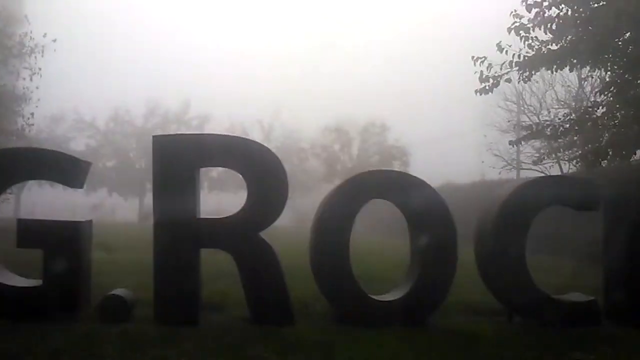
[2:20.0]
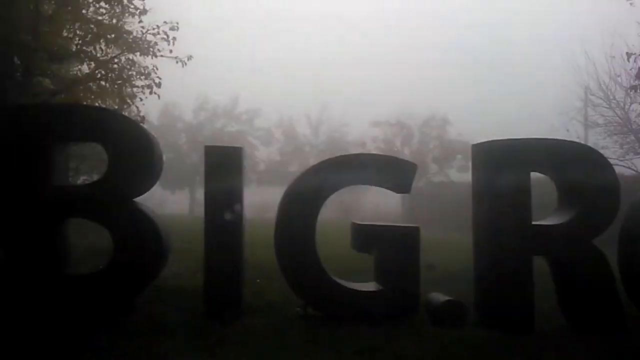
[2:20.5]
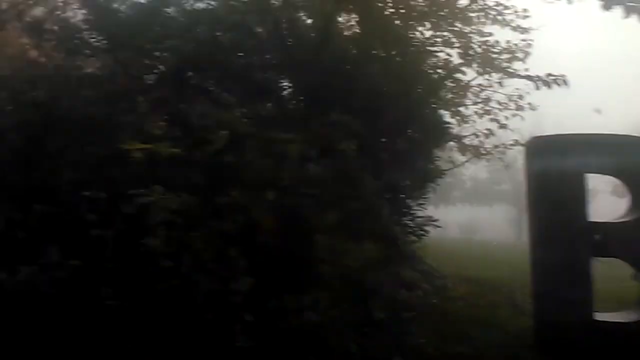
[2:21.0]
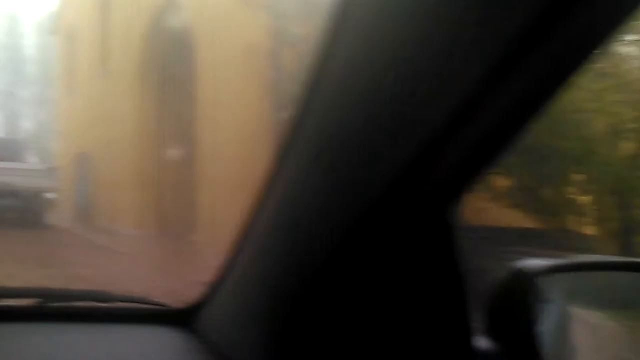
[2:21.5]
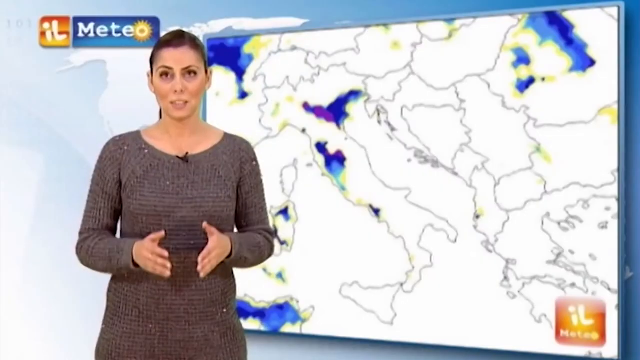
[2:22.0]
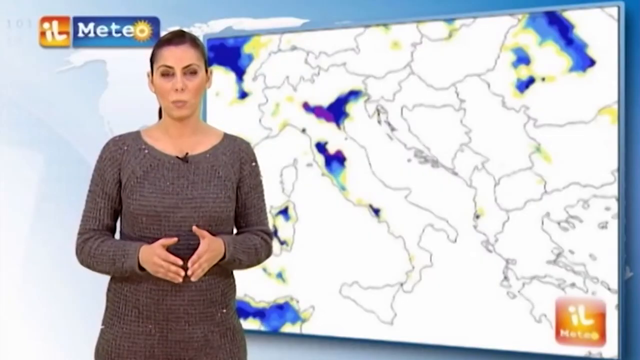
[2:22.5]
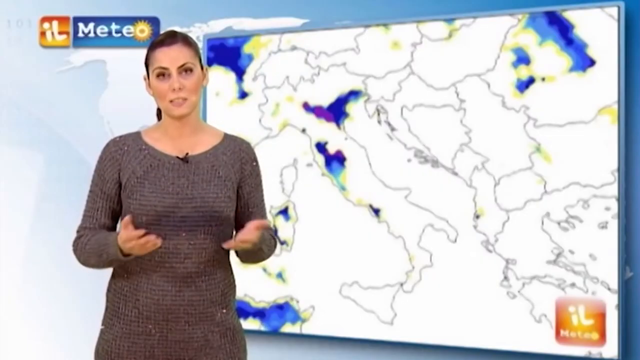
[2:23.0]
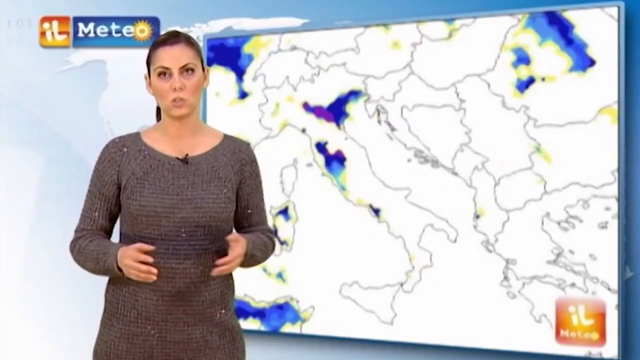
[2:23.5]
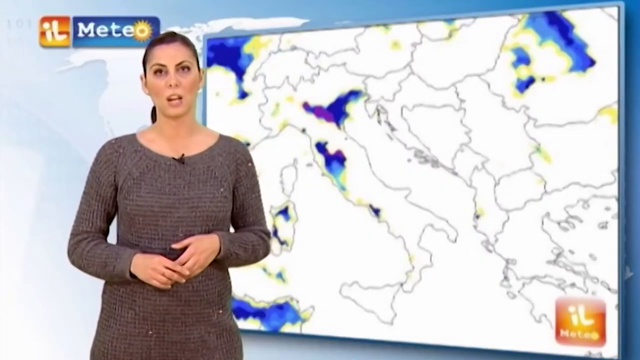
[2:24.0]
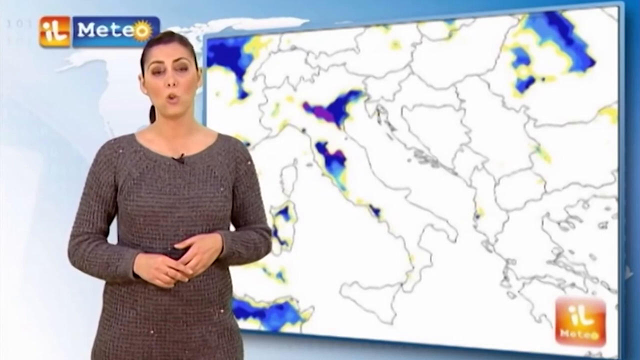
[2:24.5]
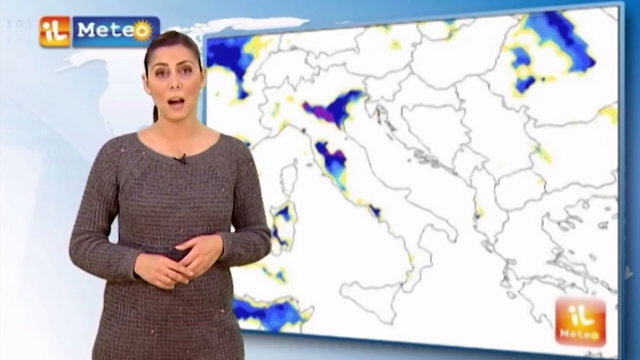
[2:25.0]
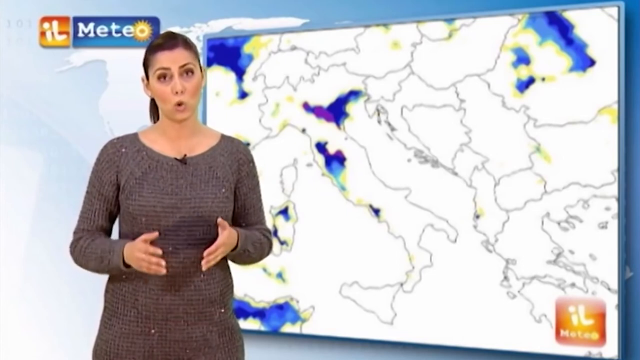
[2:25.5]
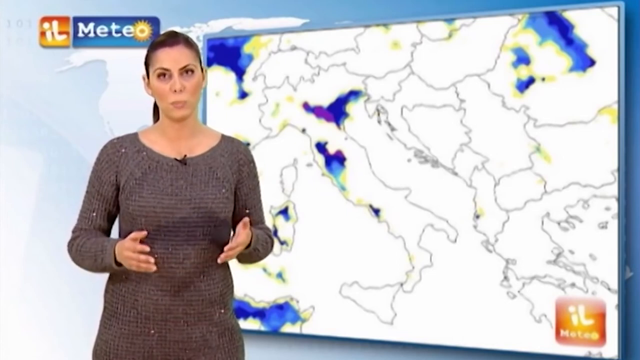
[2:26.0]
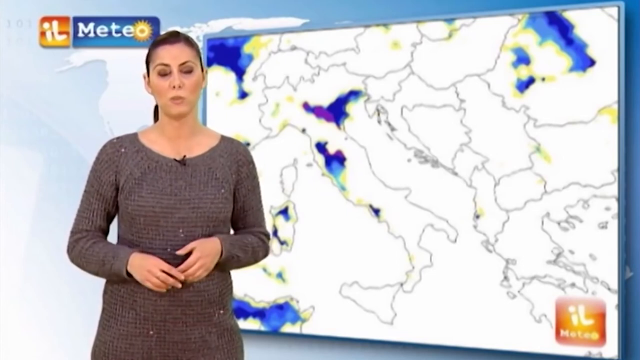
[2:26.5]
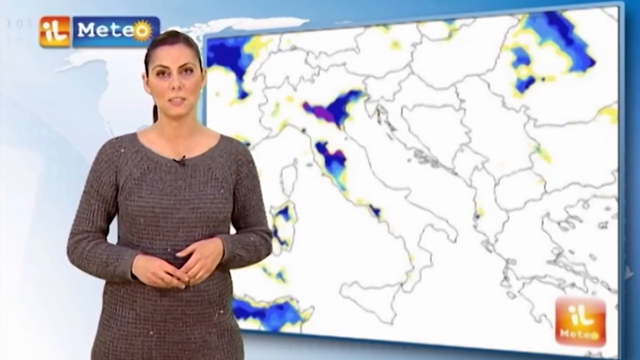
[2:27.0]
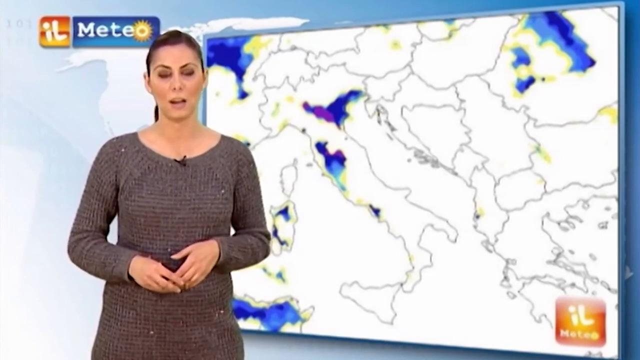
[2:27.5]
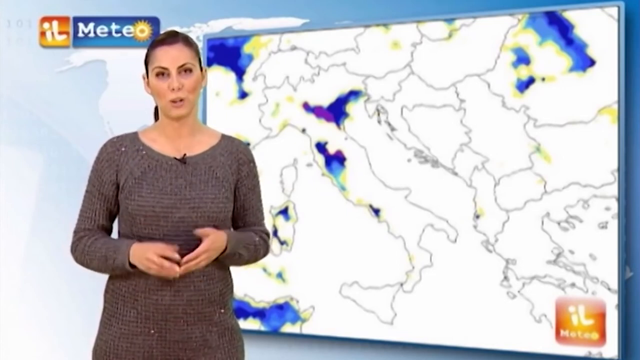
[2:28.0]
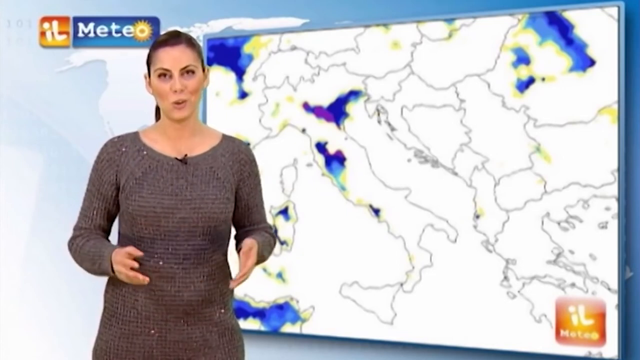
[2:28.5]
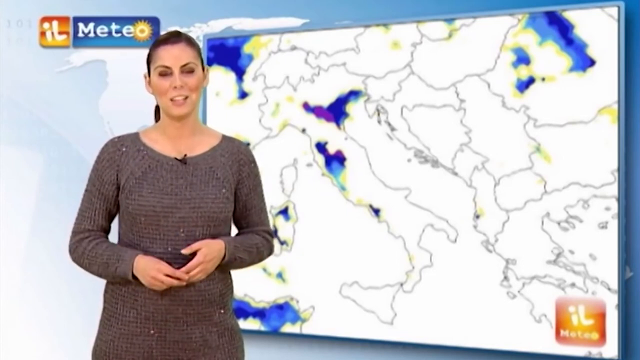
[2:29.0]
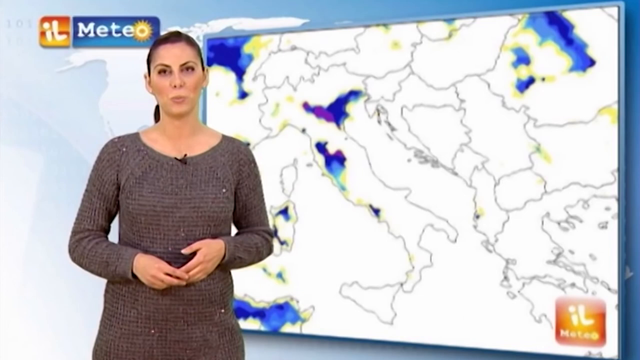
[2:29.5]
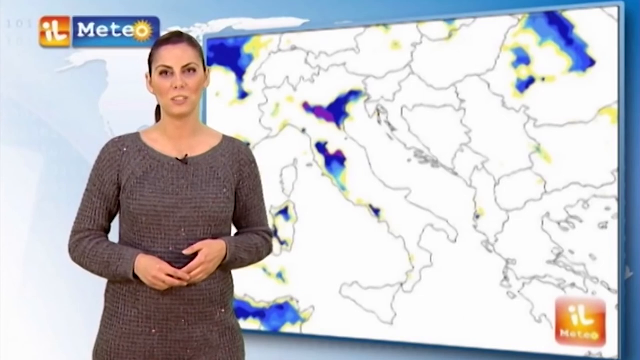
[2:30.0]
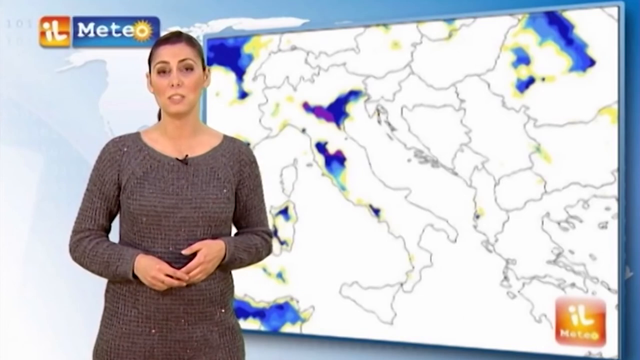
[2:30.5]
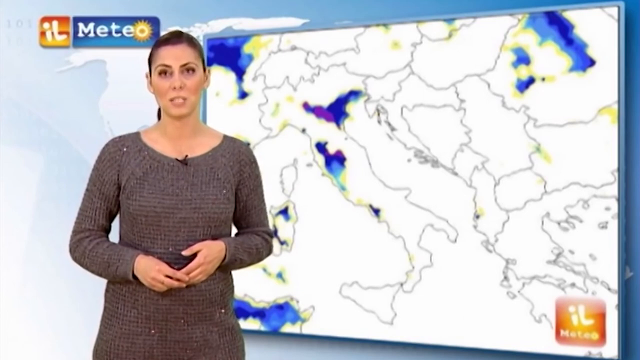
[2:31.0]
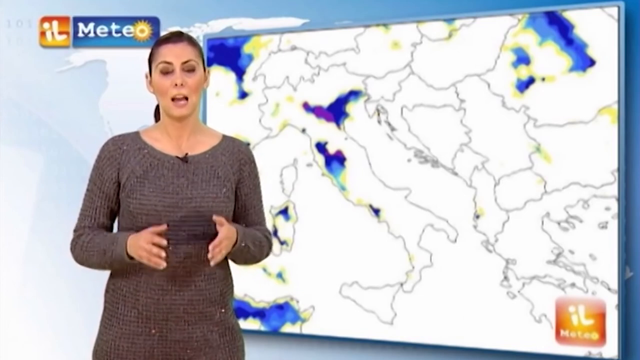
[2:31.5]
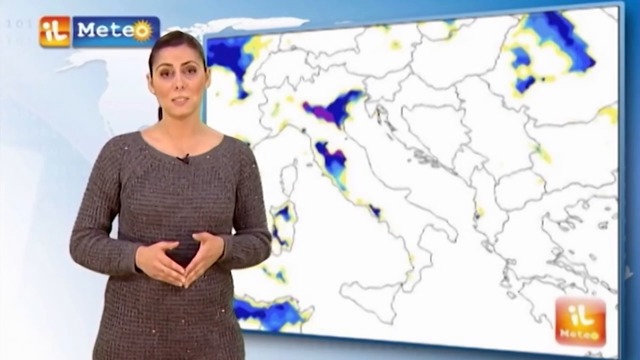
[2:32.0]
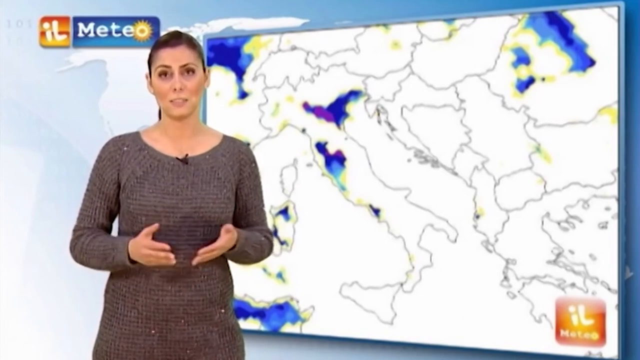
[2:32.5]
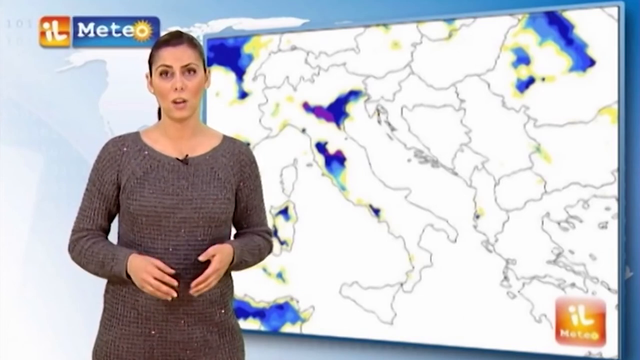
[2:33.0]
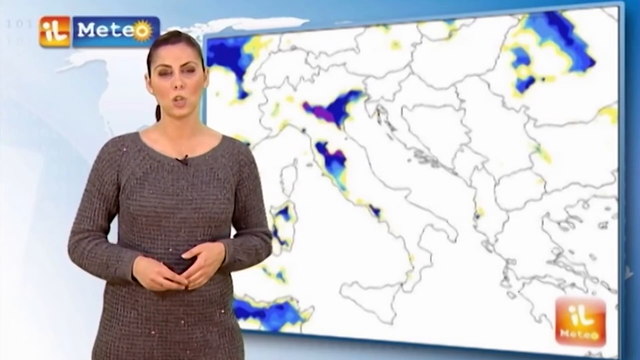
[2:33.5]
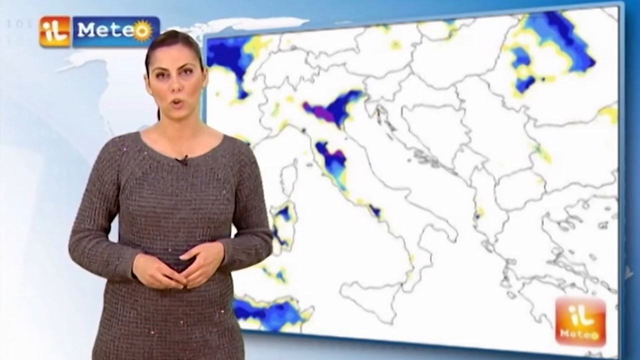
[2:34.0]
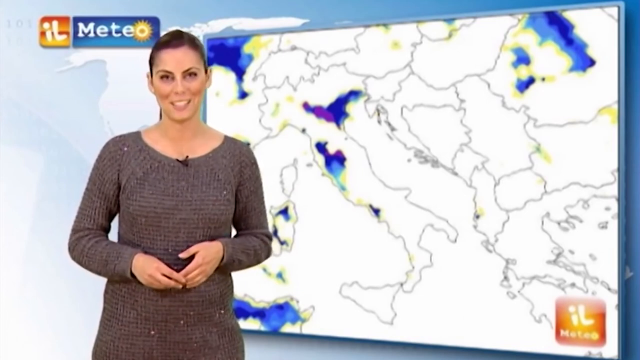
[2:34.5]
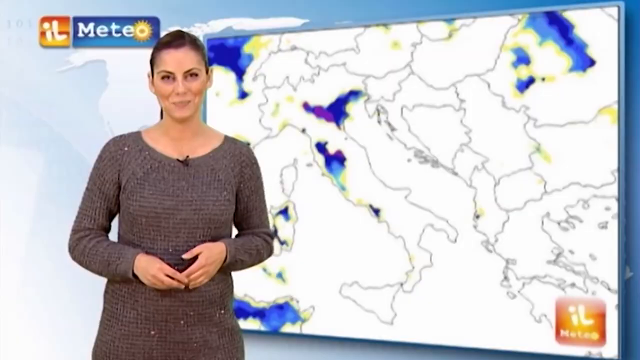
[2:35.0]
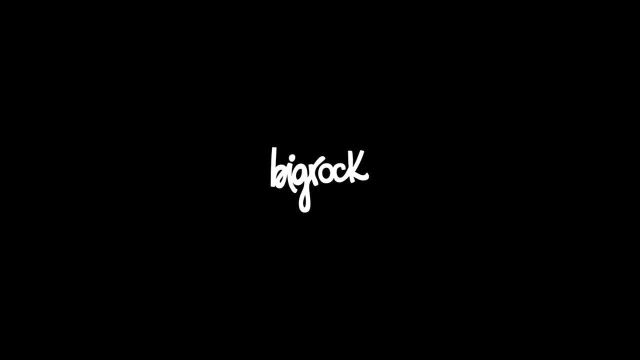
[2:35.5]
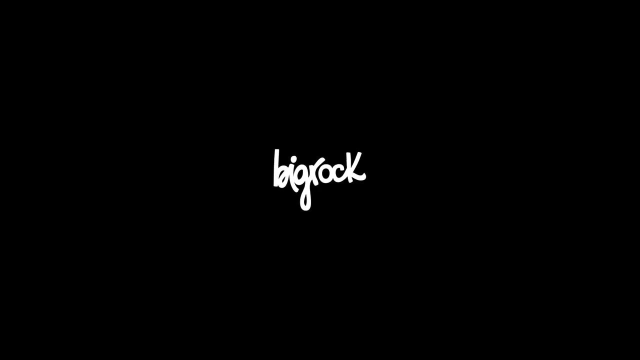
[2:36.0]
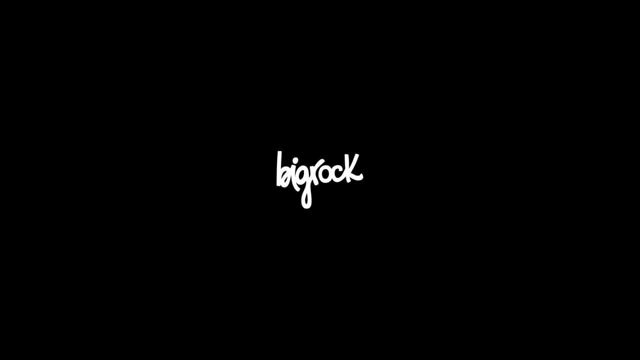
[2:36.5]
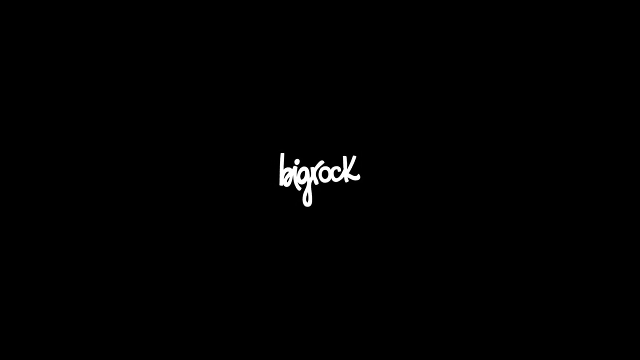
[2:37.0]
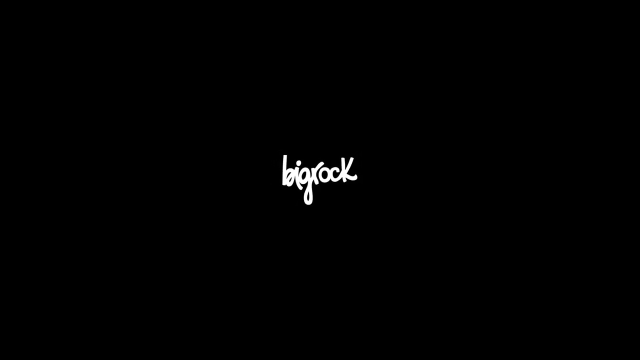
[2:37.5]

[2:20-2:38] The video appears to be taken outdoors at first; it is kind of bright outside and looks chilly. A man wears a thick dark coat with kind of gray-brown fur around the upper neck. He has a thick head of hair and a very chiseled face, is a white brunette, probably in his 30s or 40s, and smiles as he talks into a camera. Behind him is a very green meadow. He appears to be trying to relay some kind of message: his chin lifts, his nose kind of lifts up, he blinks a couple of times, at one point his left eyebrow raises, and there is a flash movement of his left hand as though he were gesturing. The scene then switches to a woman who appears to be some type of weather person, standing in some type of studio with a very colorful map behind her. She speaks professionally into a camera, her arms lifted by her sides and kind of moving up and down as she talks. At one point she uses her left hand to point, opening it and swiveling it, and she looks off to the side.